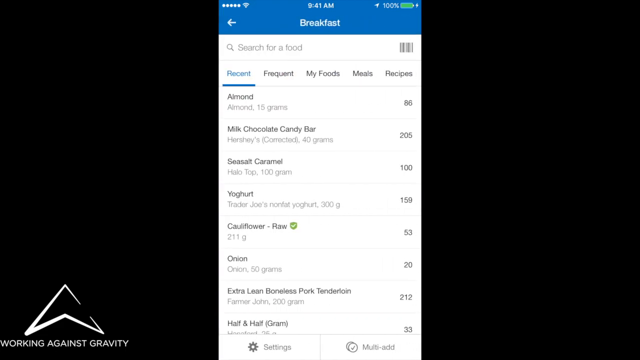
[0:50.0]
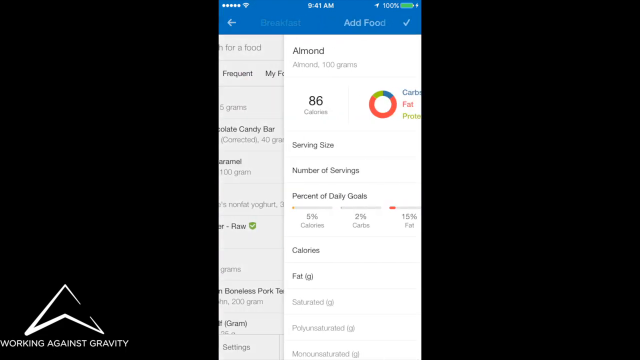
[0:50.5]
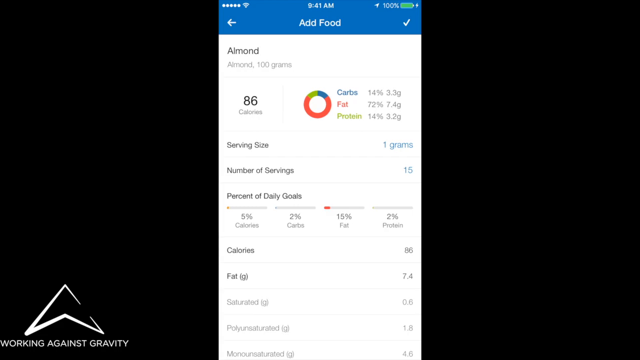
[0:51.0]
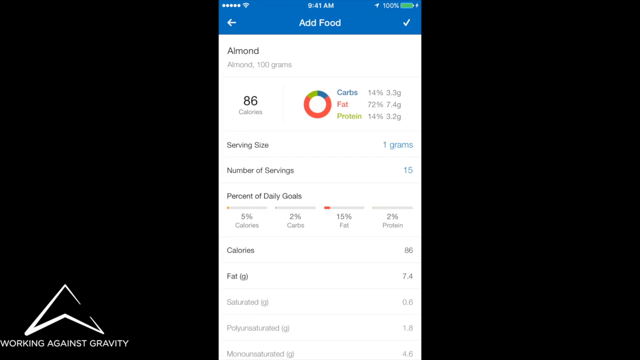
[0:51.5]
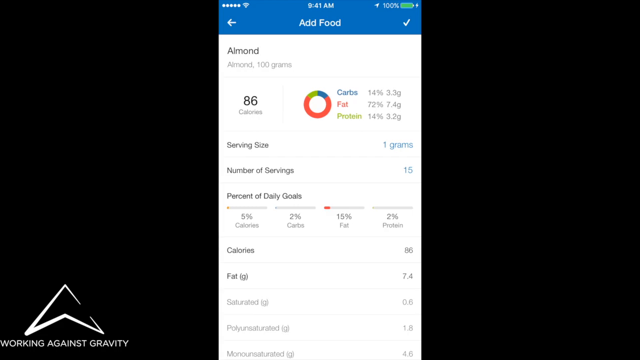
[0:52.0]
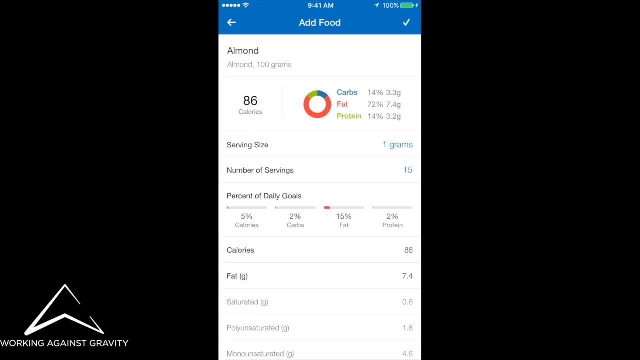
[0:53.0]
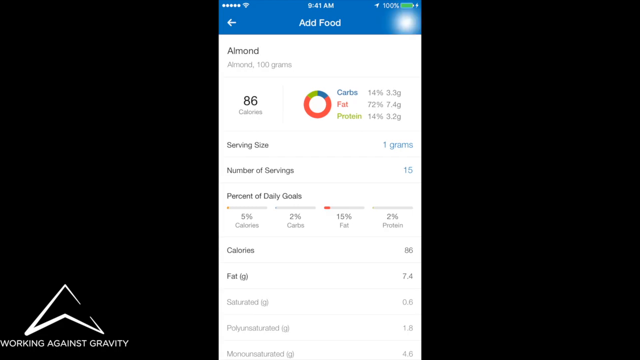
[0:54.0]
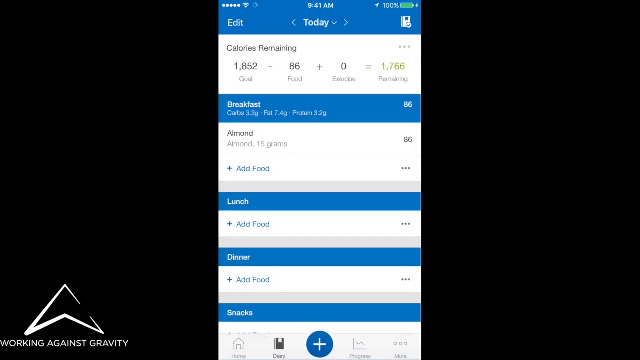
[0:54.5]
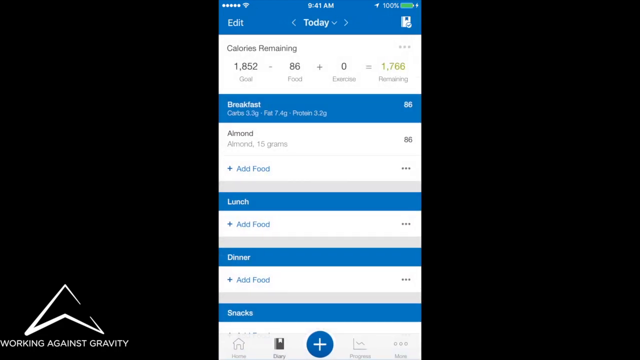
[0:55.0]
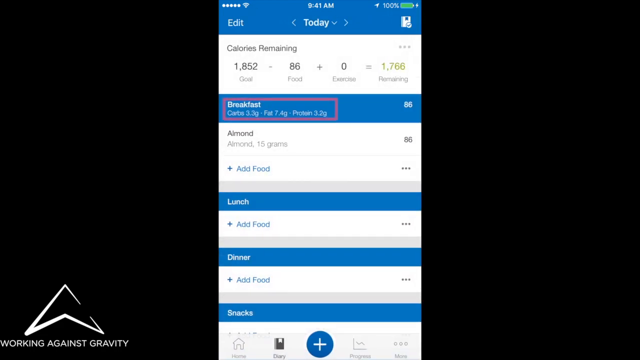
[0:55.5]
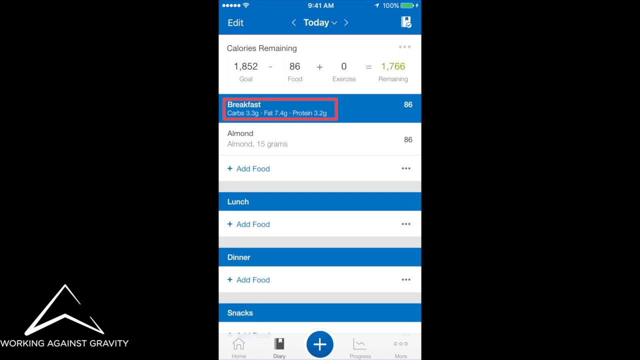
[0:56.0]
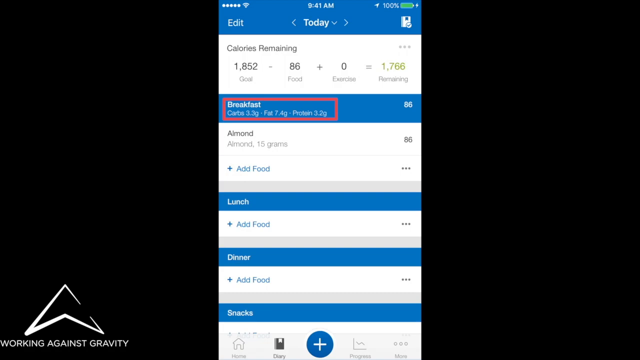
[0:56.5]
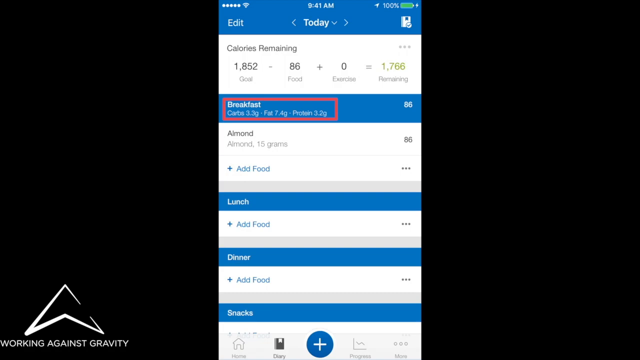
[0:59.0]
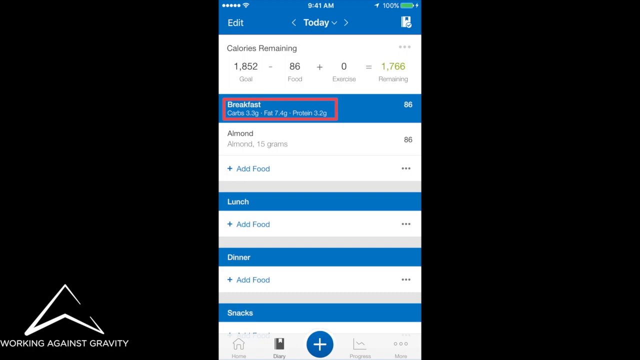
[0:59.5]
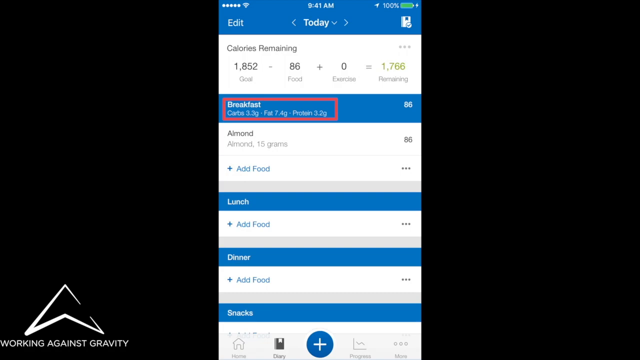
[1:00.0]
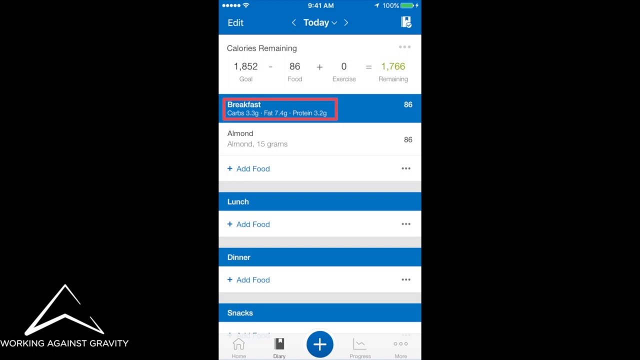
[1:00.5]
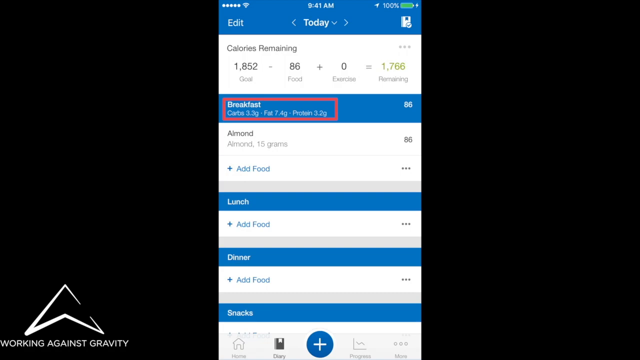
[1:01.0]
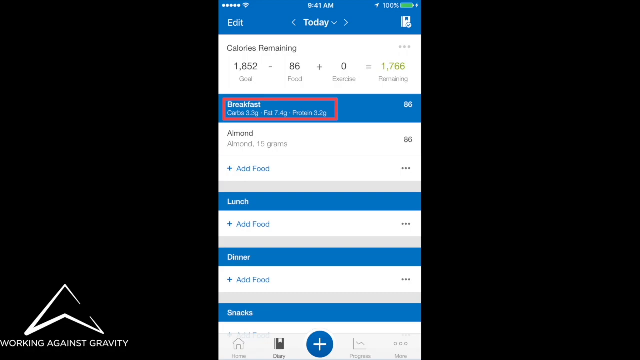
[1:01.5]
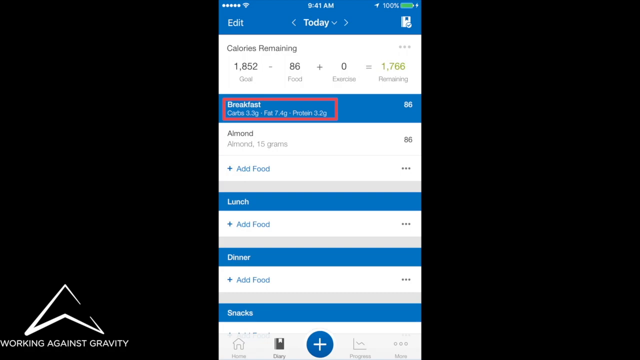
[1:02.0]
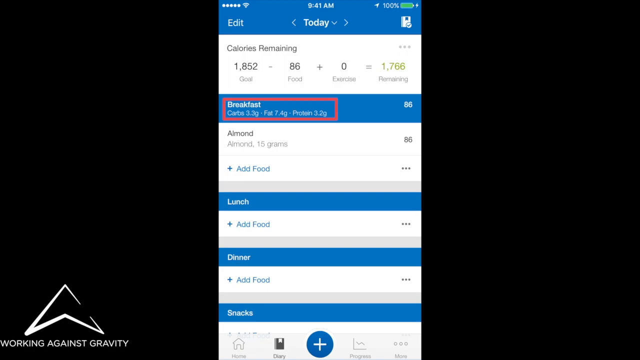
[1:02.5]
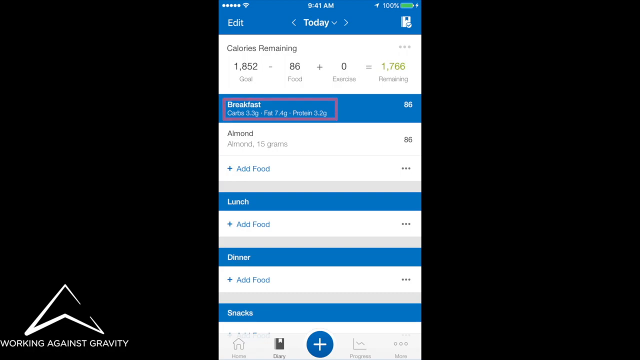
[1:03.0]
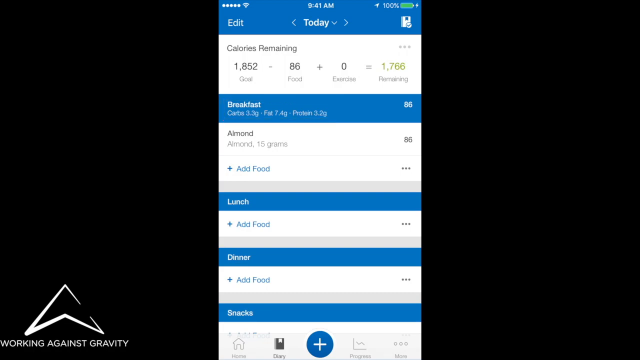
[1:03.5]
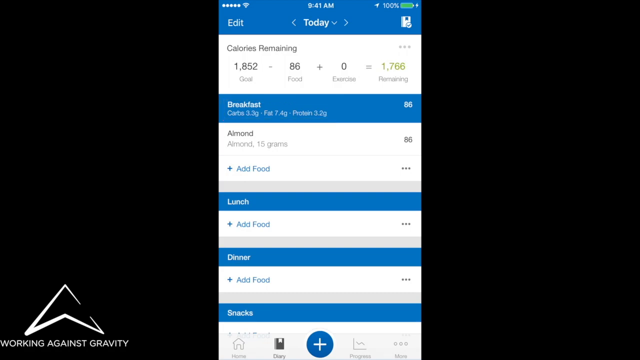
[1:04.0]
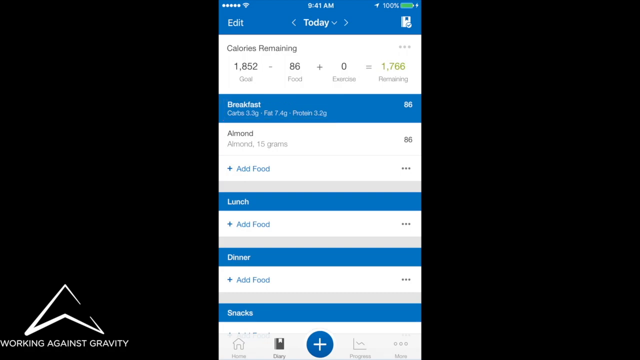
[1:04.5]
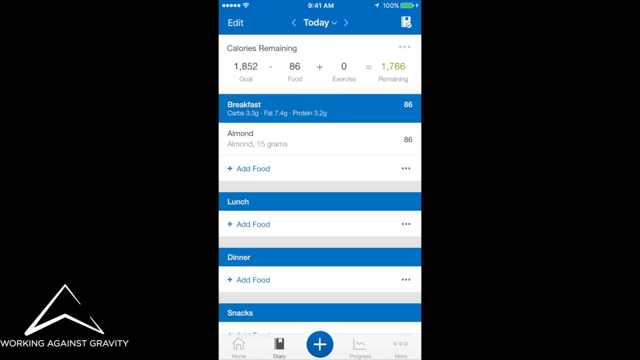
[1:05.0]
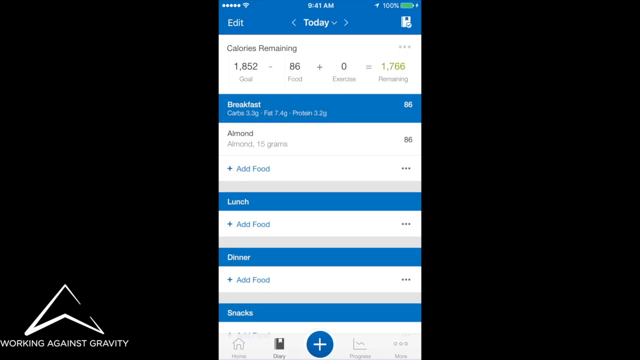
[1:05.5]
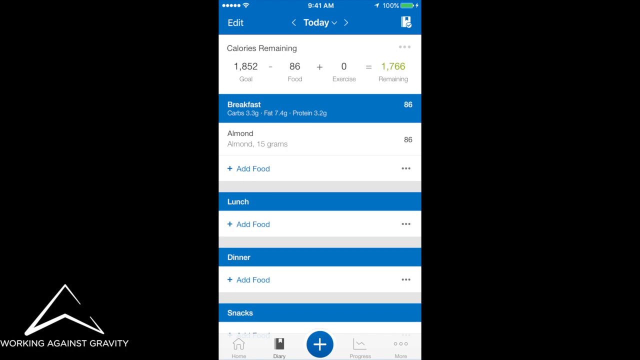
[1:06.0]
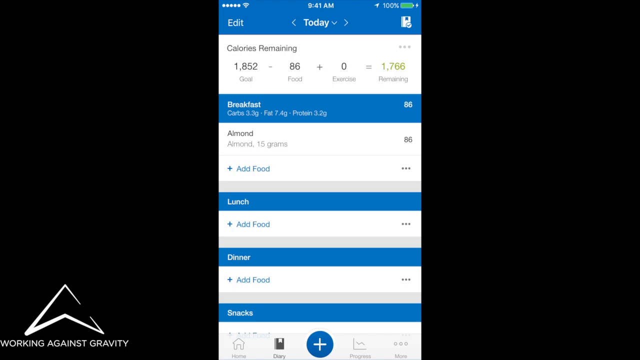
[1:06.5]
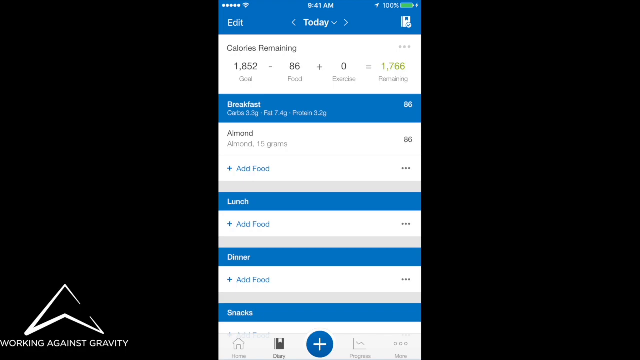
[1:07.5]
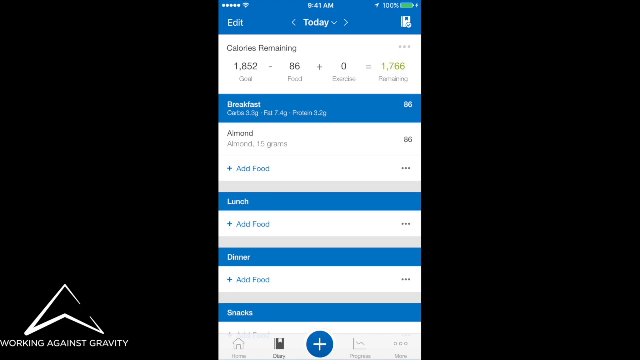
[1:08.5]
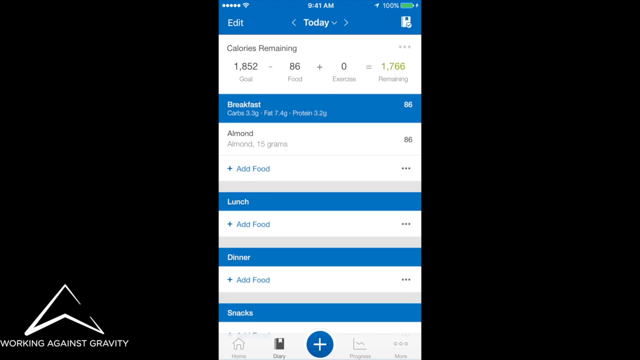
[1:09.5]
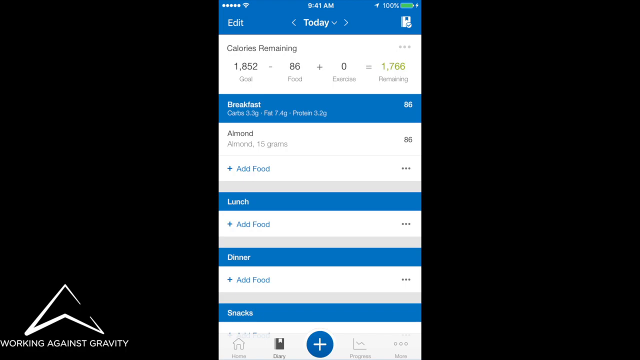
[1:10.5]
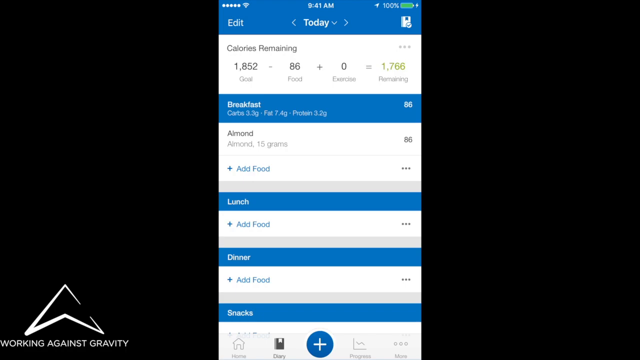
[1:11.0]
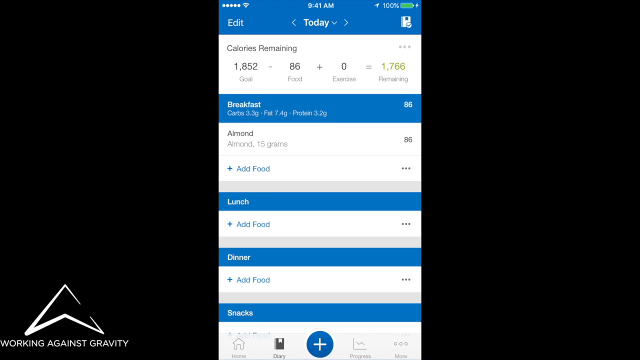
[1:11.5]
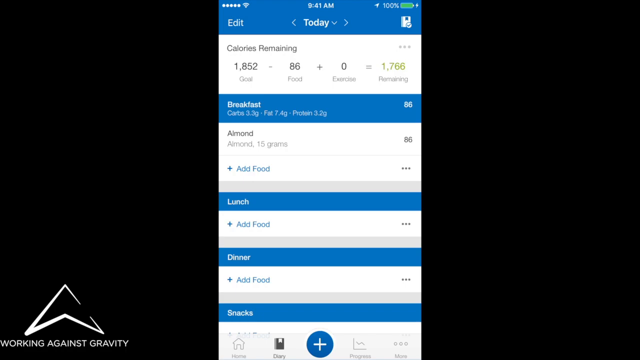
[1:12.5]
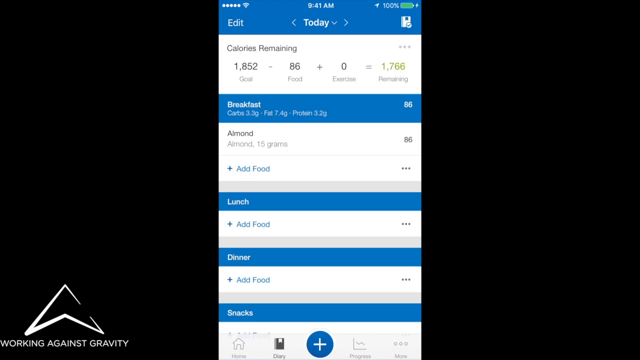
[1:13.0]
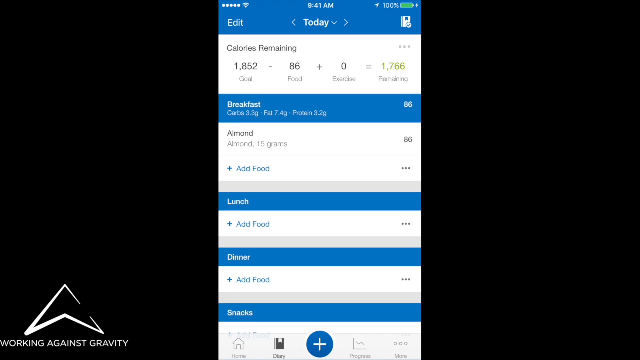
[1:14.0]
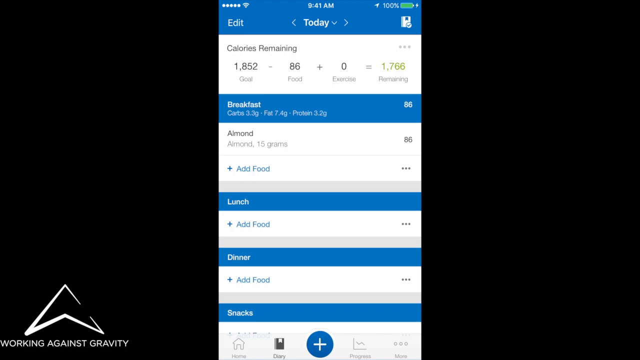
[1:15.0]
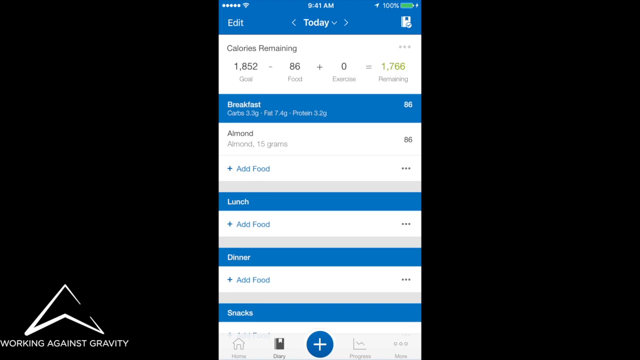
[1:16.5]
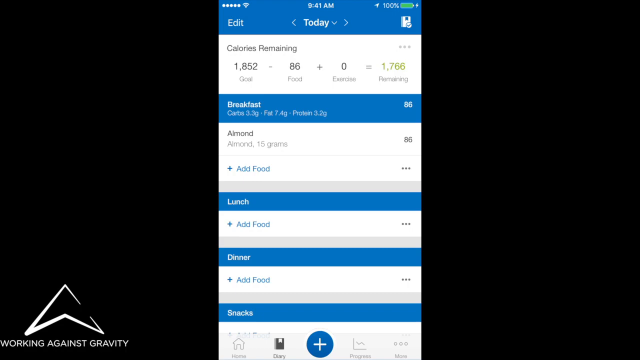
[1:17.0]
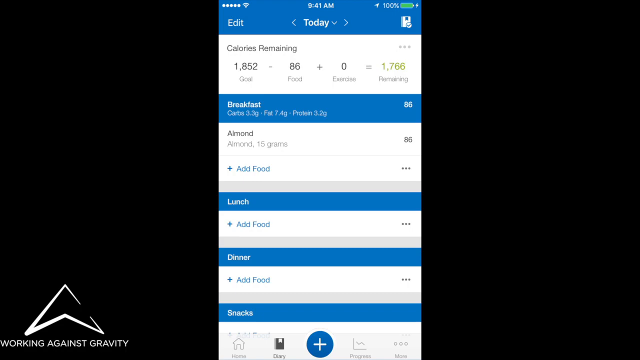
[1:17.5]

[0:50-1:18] The top blue strip now reads "breakfast" in white in the middle, and everything below it is on a white background. There is a search bar with a small magnifying glass picture and grey text reading "search for a food", with an image of a barcode on its far right. Just below are several headings. The first, "recent", is highlighted in blue with a blue line under it, showing it is currently selected; the rest are in grey and read "frequent my foods meals and recipes". Under "recent" is "almond" in darker grey, with a lighter grey description below reading "almond, 15 grams" and a calorie count of 86 on the far right. The following entries list a Hershey's milk chocolate candy bar, 40 grams, 205 calories; Halo Top sea salt caramel, 100 gram, 100 calories; Trader Joe's non-fat yogurt, 300 gram, 159 calories; raw cauliflower, 211 gram, 53 calories; onion, 50 grams, 20; extra lean boneless pork tenderloin parmesan, 200 grams, 212; and finally half and half. The screen then switches to the layout for the almond micronutrients.